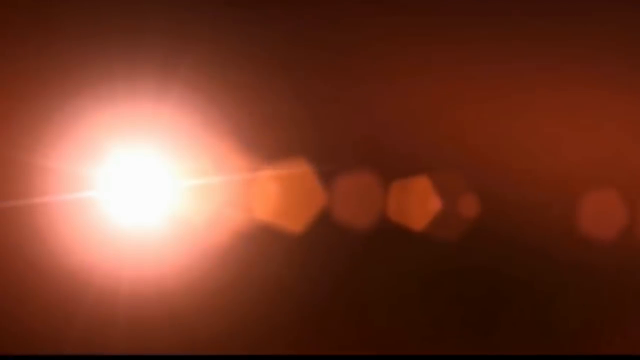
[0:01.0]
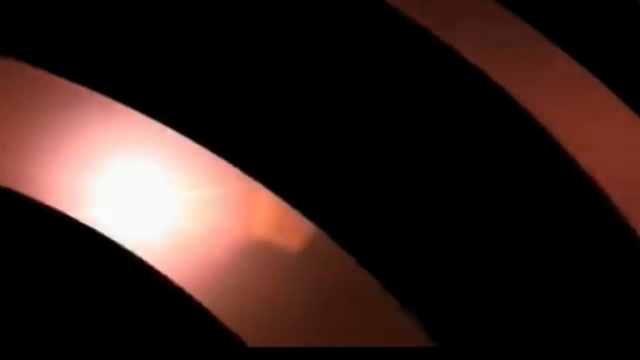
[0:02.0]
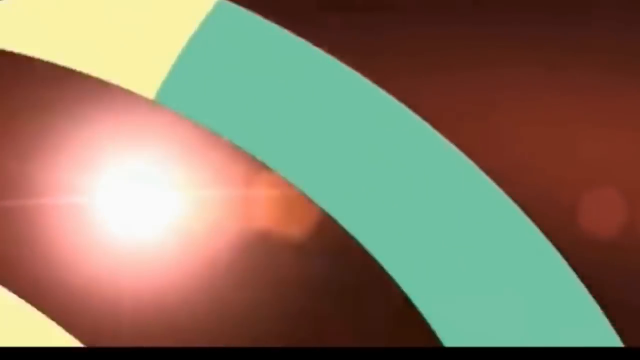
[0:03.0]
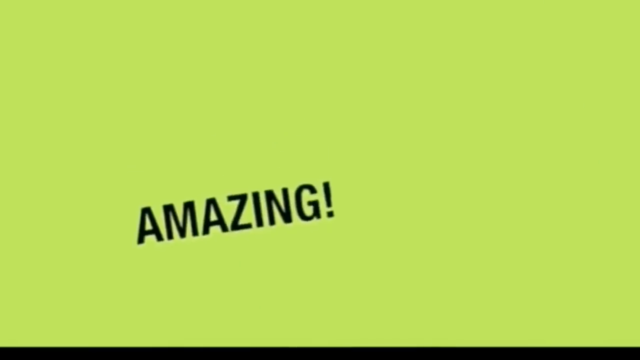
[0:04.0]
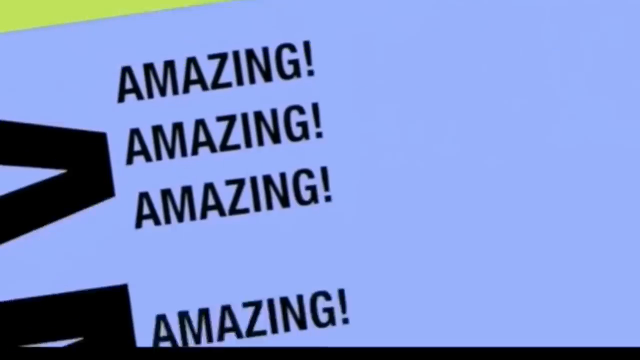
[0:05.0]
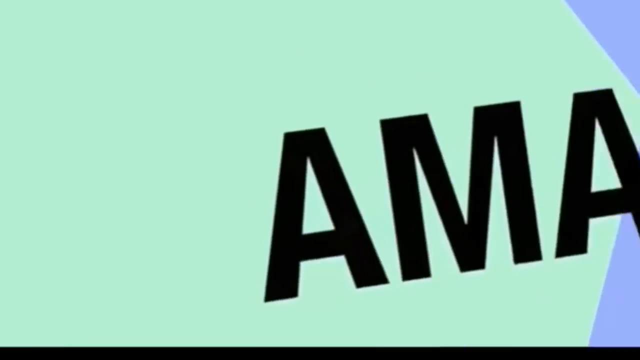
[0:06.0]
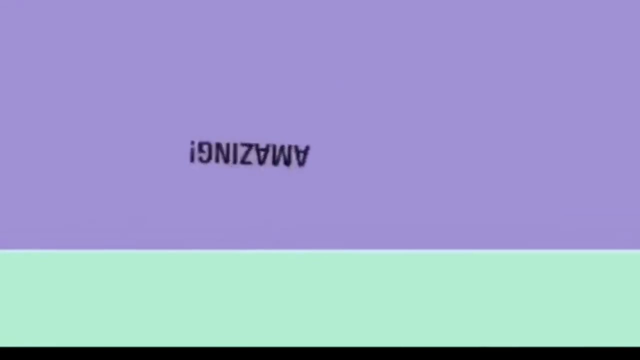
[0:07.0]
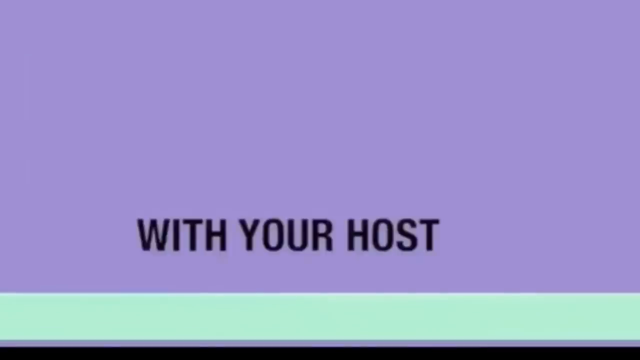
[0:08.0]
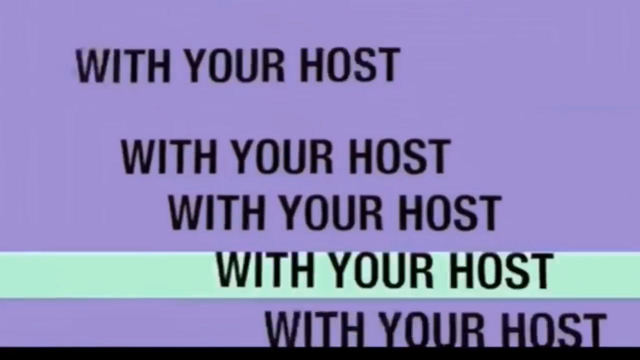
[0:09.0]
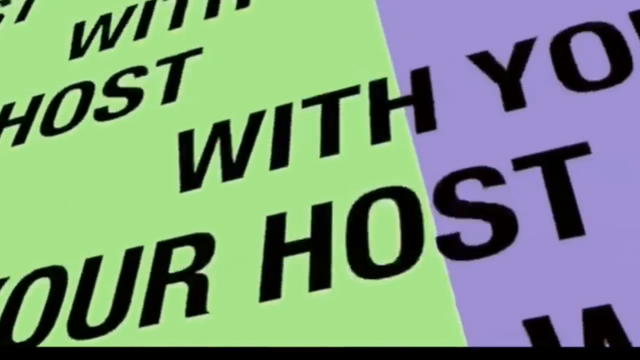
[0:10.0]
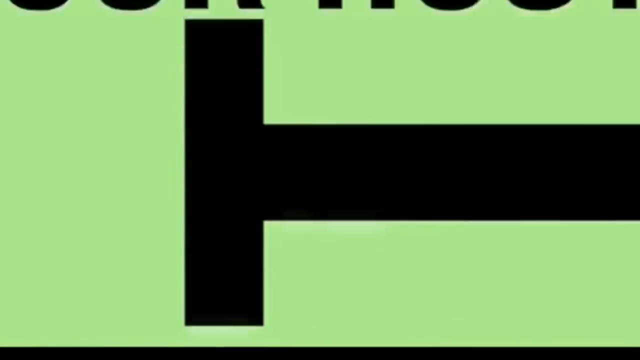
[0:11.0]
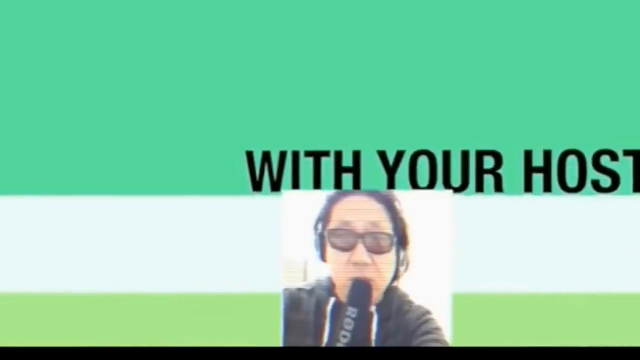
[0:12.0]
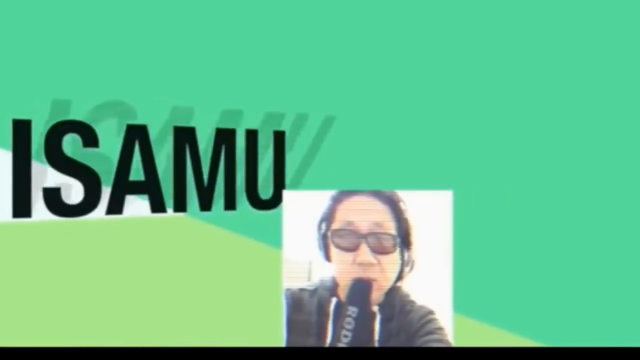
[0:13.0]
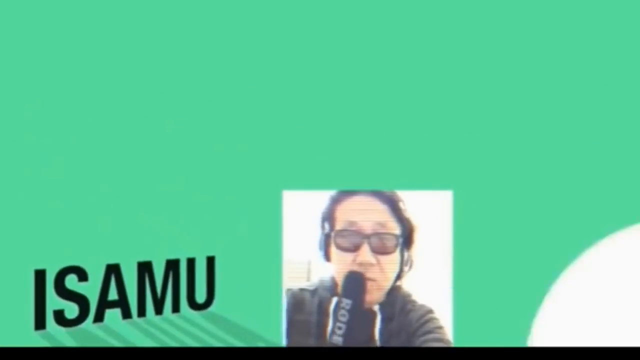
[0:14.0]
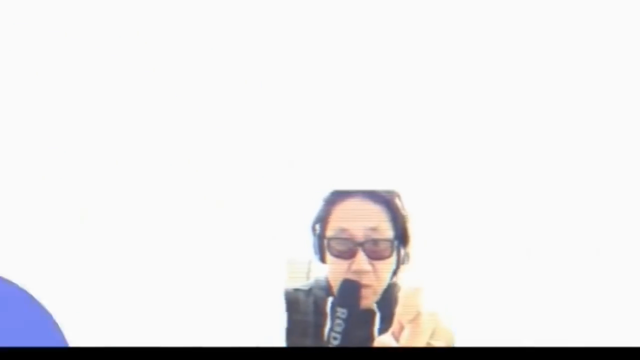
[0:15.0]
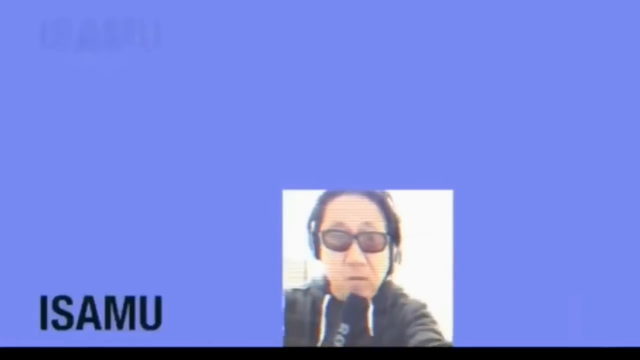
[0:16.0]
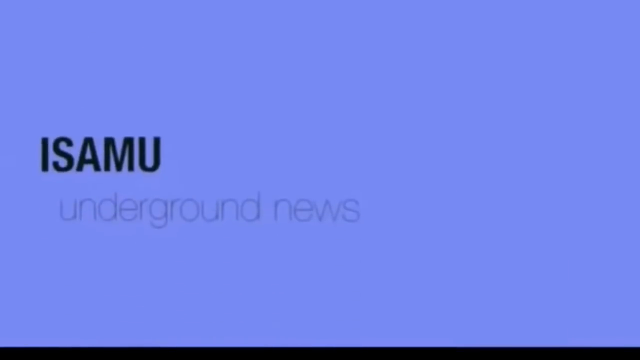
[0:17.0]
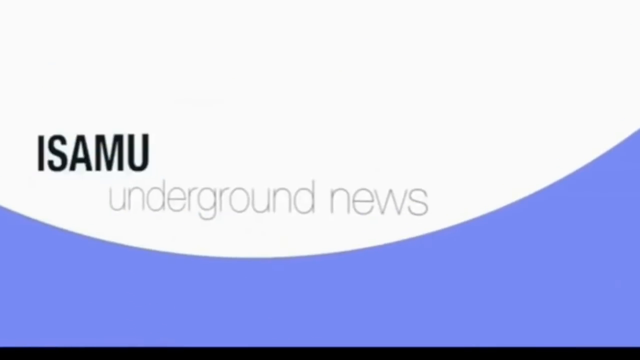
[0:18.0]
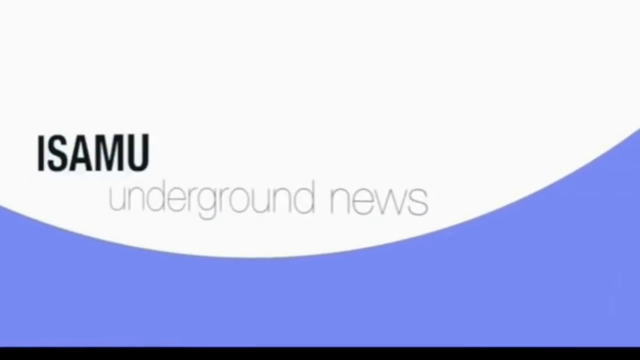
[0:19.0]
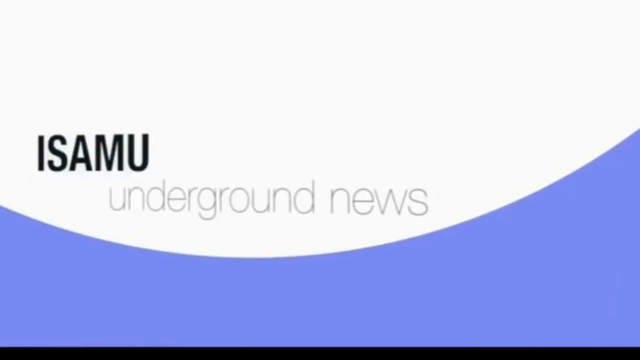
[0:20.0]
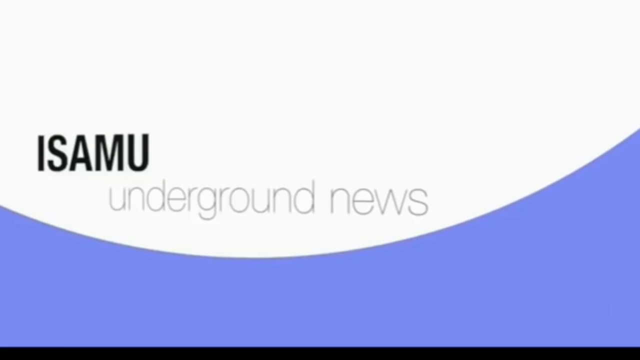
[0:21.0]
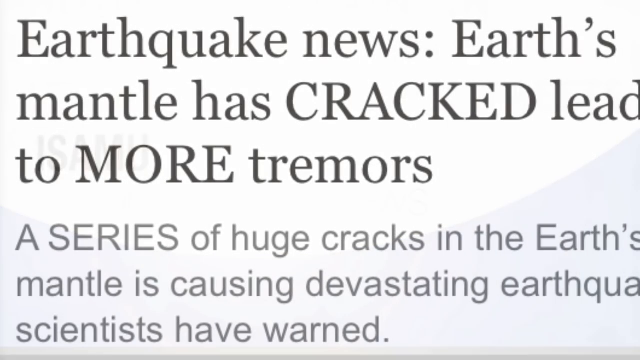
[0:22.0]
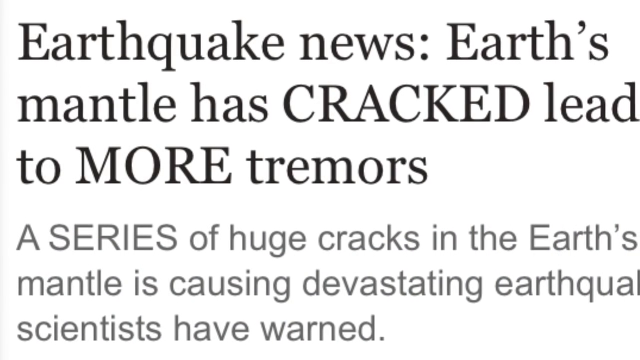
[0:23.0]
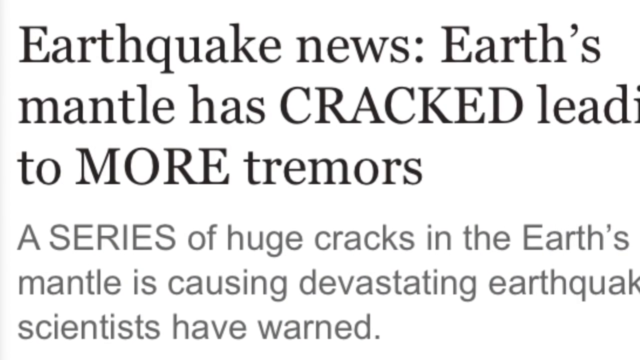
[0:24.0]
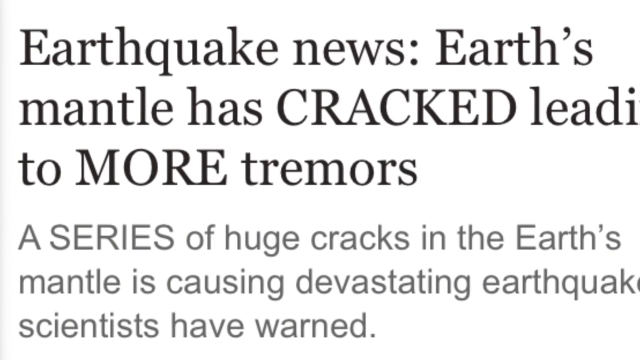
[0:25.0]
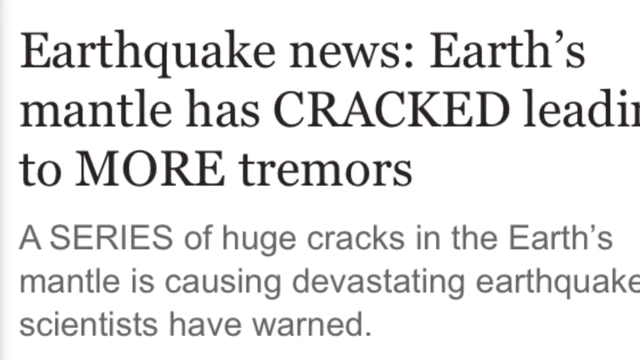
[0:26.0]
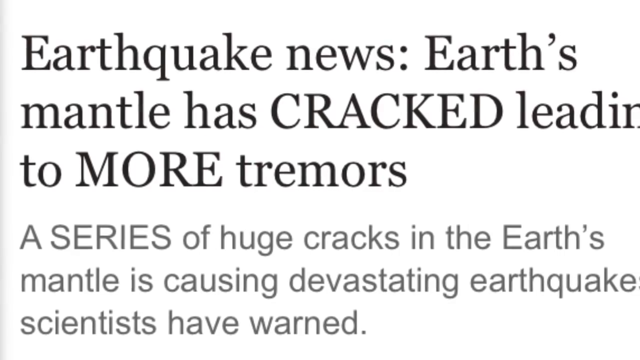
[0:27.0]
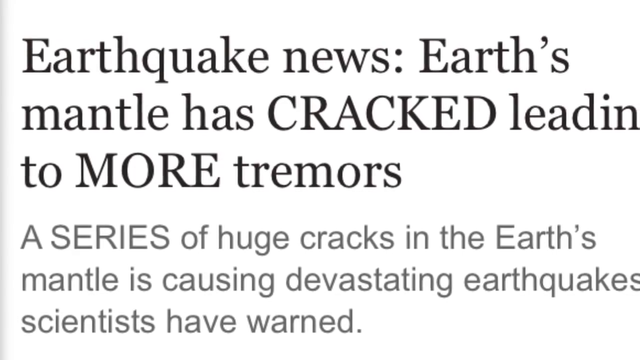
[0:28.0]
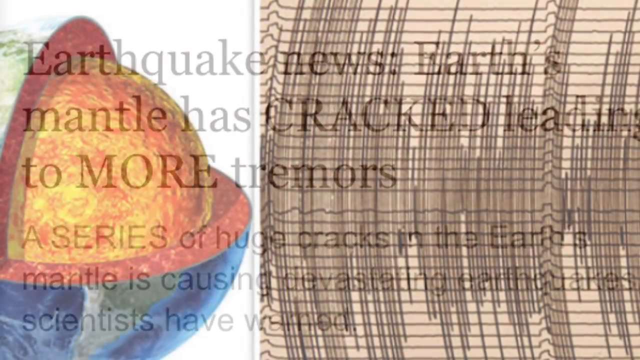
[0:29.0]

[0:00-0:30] The video opens with graphs flashing in and out in orange, neon green and lime green, while the word "amazing" pops up all over. Introductory text reads "with your host" and keeps going over, followed by the name "Asamu" (spelled I-S-A-M-U). Someone wearing earphones and sunglasses-like glasses appears, and he speaks into a microphone. The text "underground news" appears, and the colors shift through different variations, including purples, before a white background shows "Asamu" and "underground news" in black font. A news article pops up that reads "earthquake news. Earth's mantle has cracked. Led to more tremors. Series of huge cracks in the earth's mantle is causing devastating earthquakes. Scientists have been warned." A picture of the earth's mantle then appears.